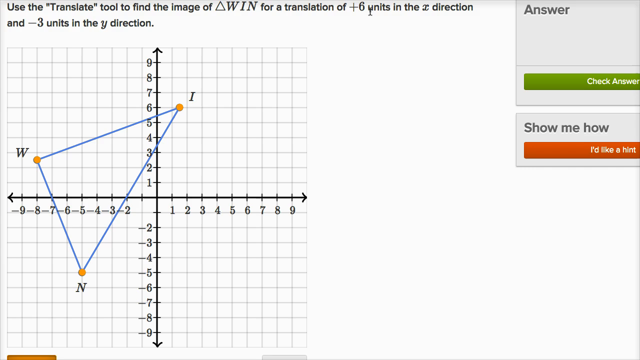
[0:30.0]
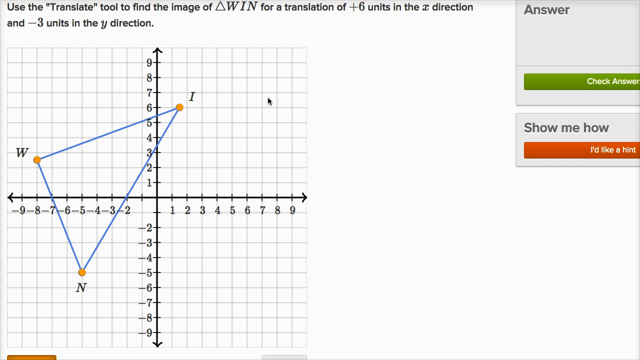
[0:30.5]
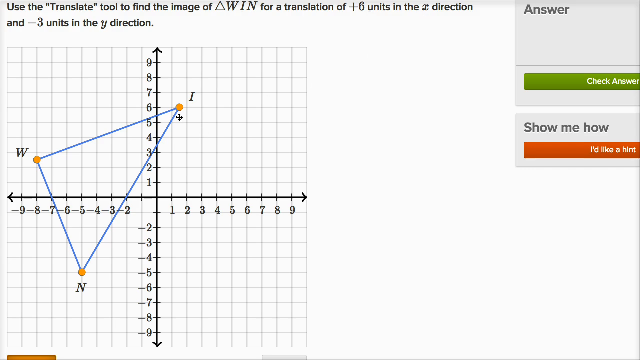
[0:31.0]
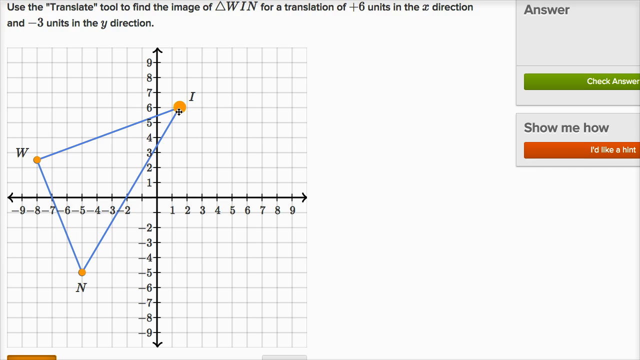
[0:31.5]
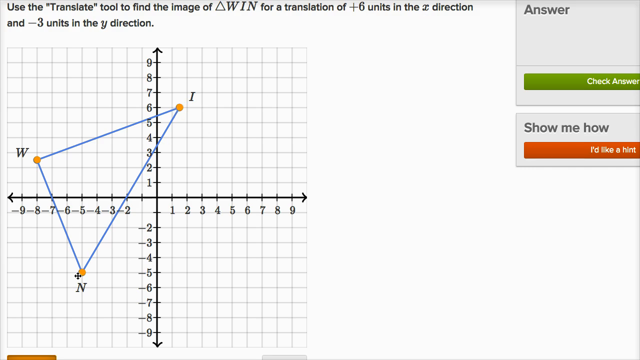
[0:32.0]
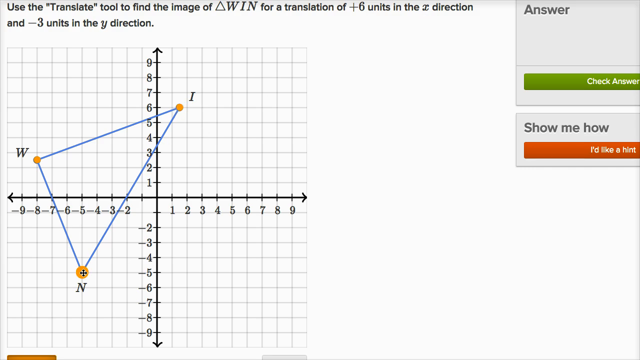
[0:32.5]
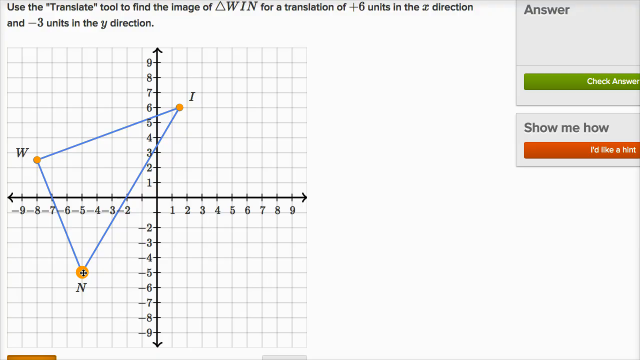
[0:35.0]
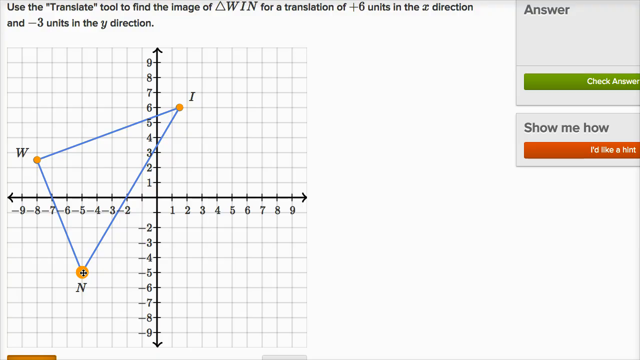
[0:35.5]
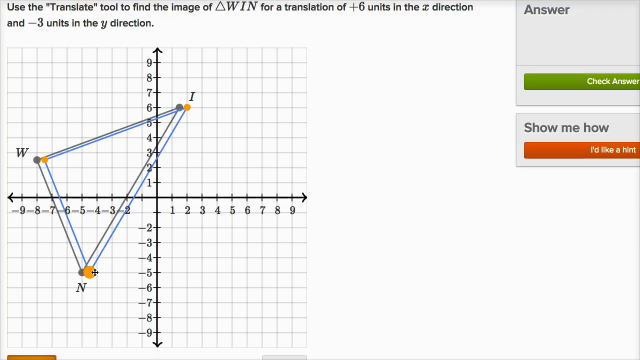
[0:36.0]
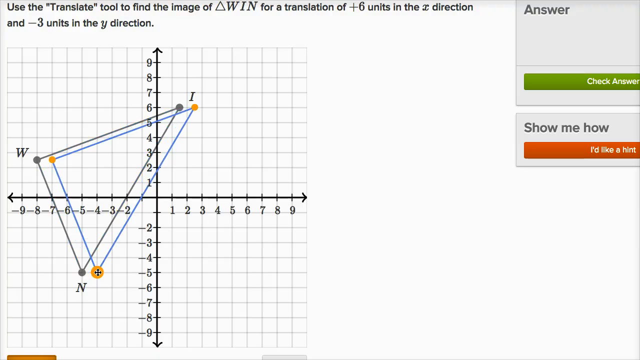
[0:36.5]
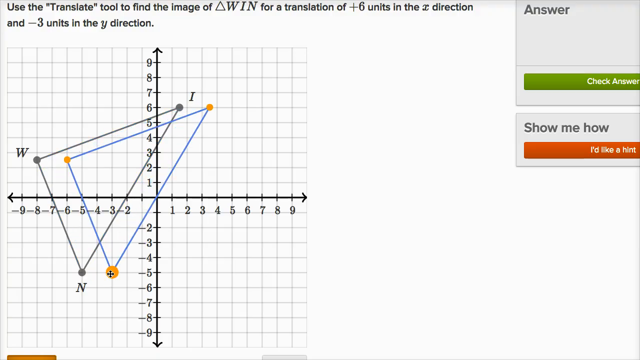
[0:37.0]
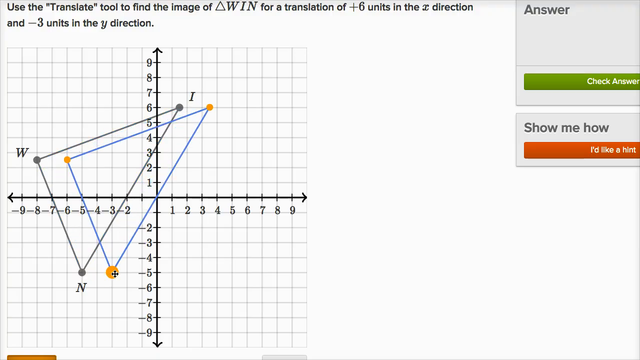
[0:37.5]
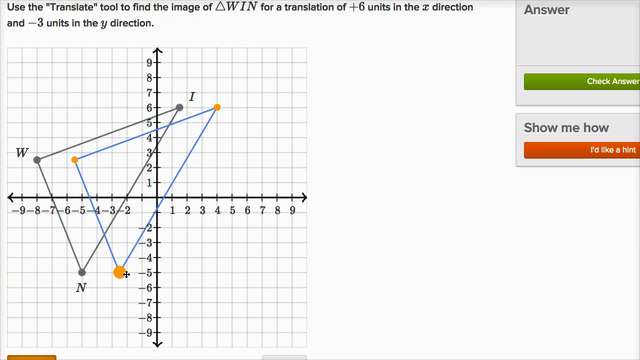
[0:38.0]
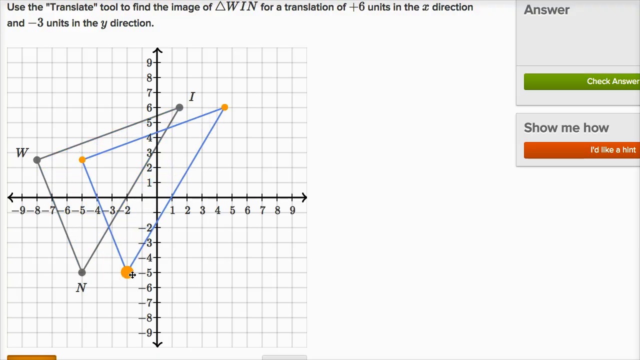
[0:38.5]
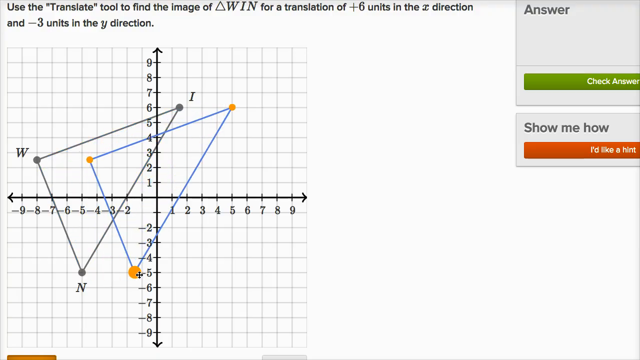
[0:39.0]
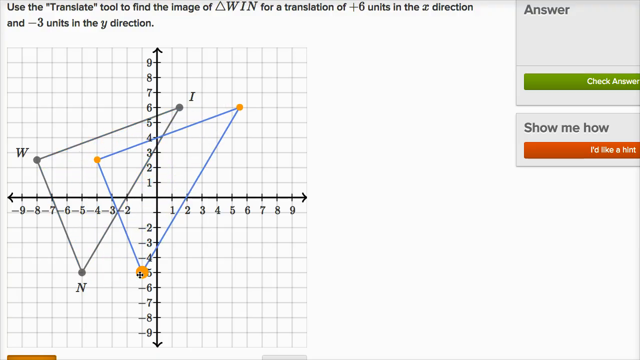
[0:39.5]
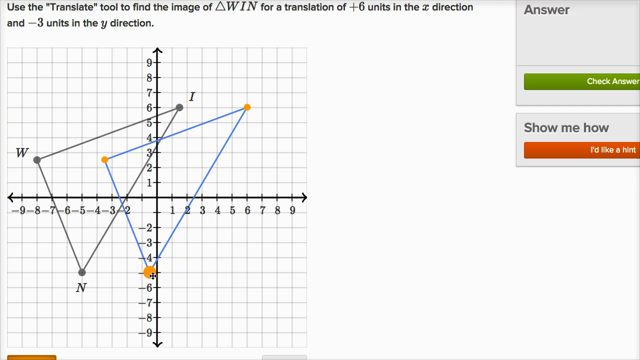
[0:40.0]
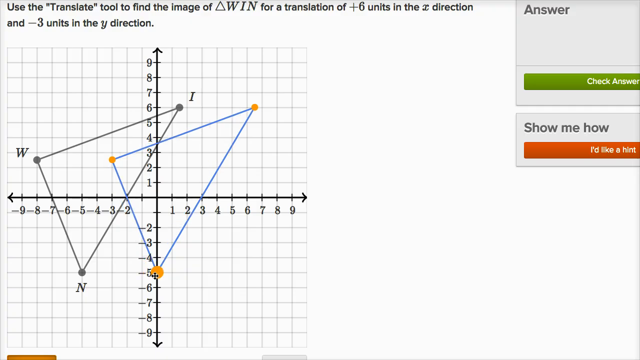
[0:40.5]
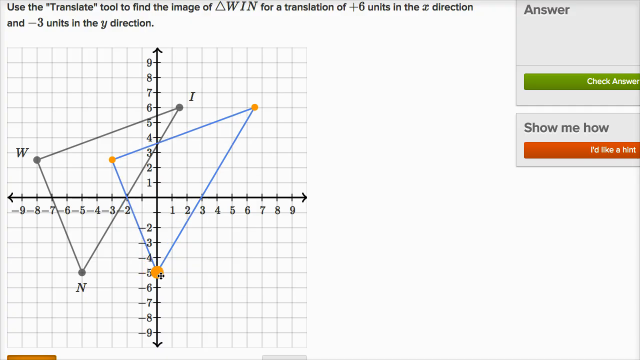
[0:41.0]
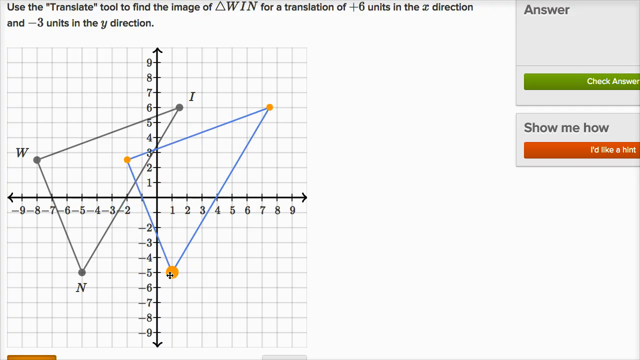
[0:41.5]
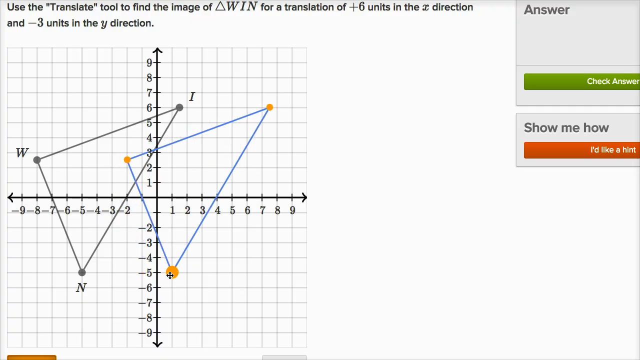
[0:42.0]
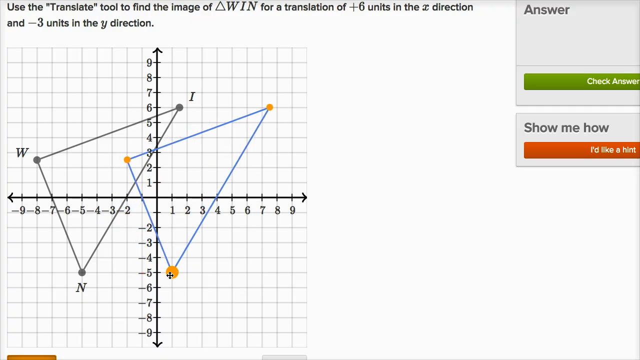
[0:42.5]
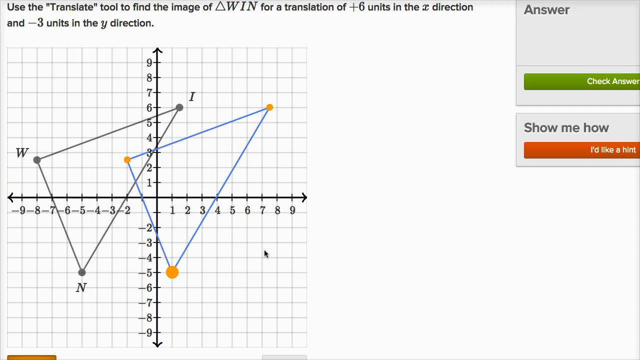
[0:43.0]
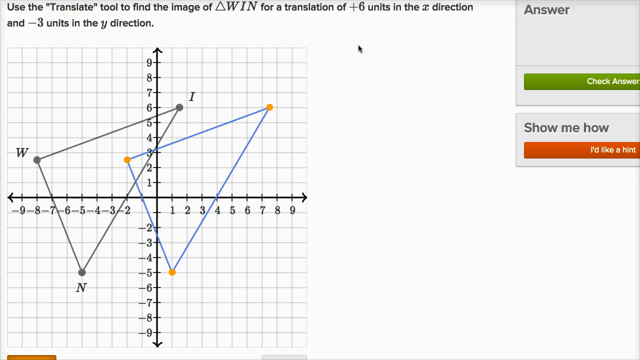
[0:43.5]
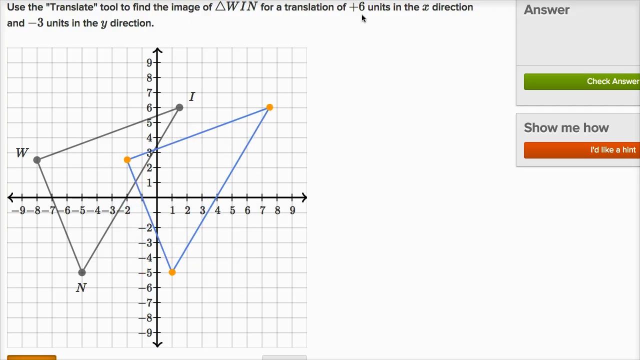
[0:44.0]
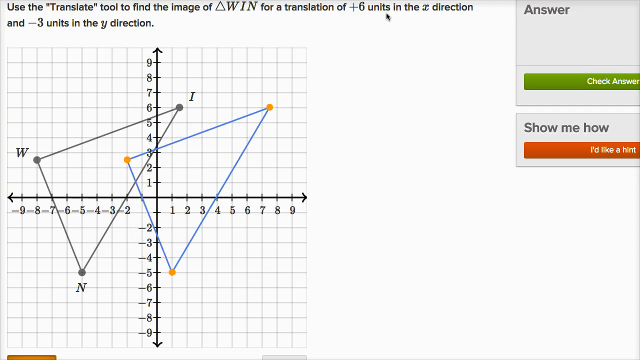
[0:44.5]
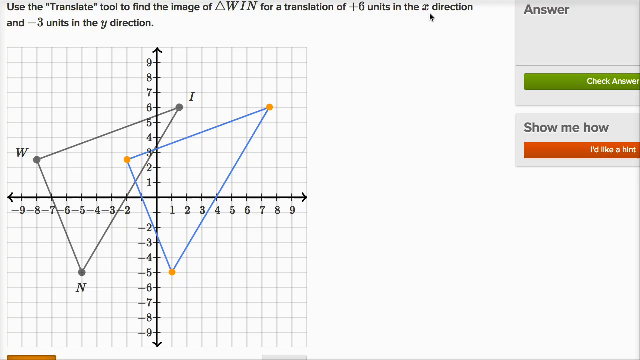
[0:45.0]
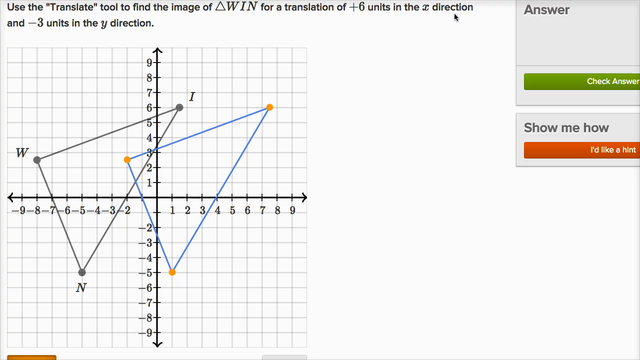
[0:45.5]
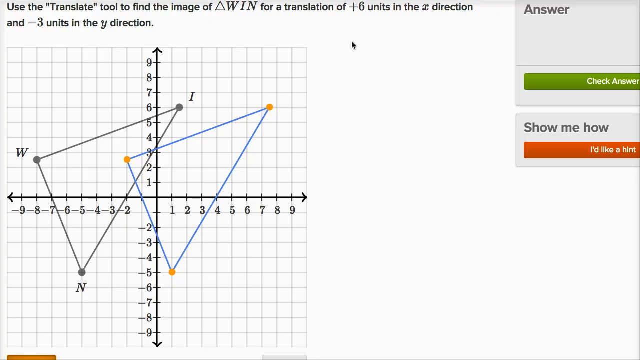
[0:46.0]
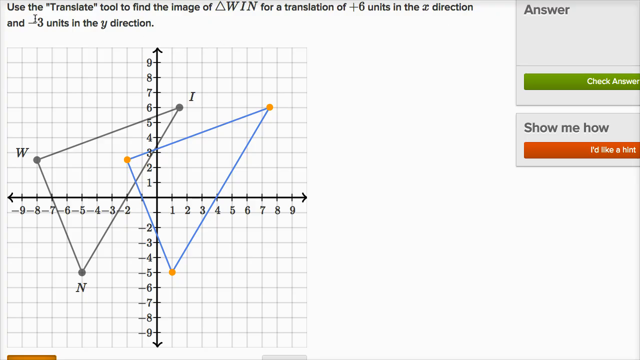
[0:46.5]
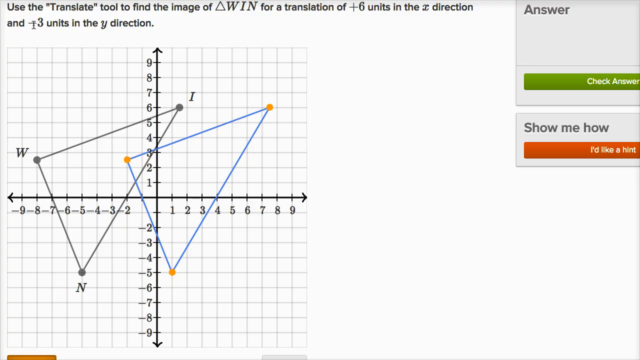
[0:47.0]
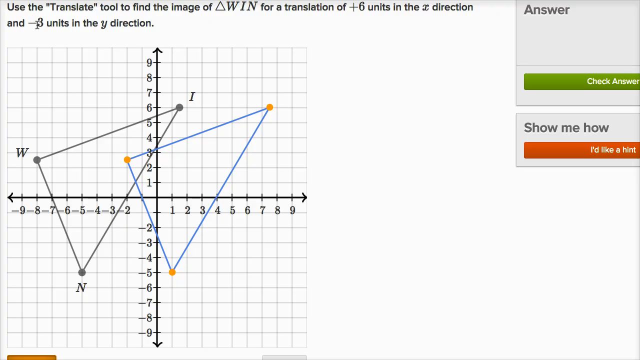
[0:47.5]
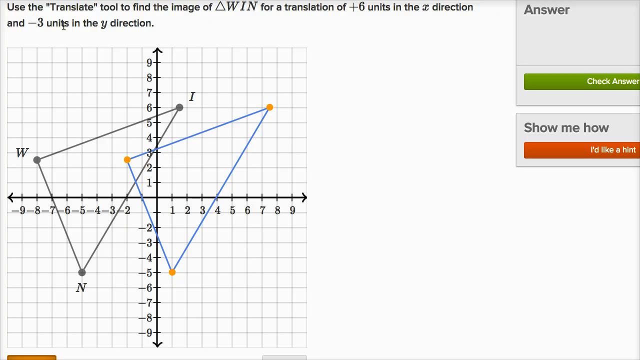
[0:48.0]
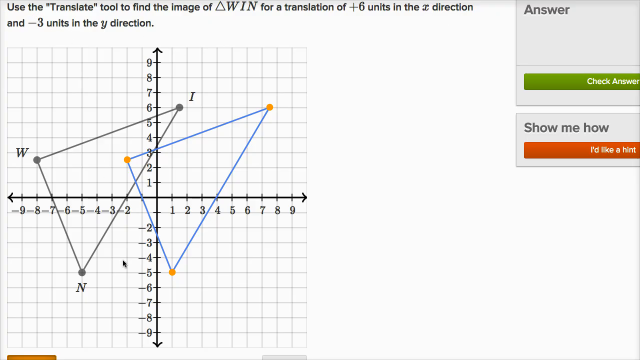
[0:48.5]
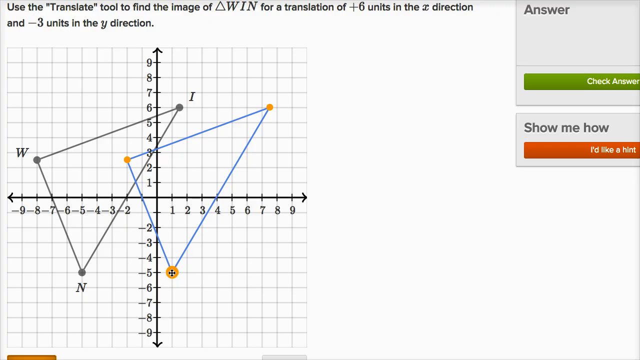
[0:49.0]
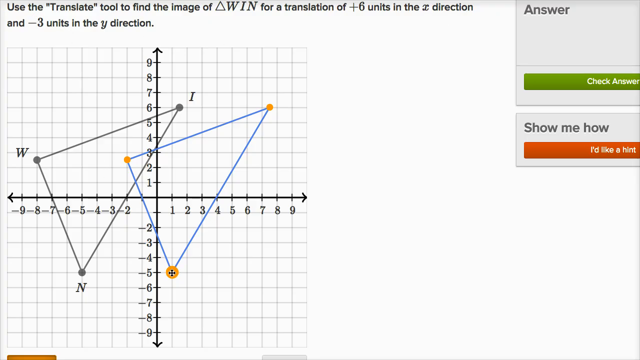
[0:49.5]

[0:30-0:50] The transform button at the bottom left of the graph has been switched on, making each of the points glow and clickable. The person appears to click on the points, then clicks on N, holds it down, and drags it. At the top, the mouse is placed over the "plus six" where the question says "for a translation of plus six". N starts at negative five and is dragged toward one, and the entire triangle moves over with it. The blue triangle with yellow dots has been moved, and its old position is grayed out: a faded gray triangle remains visible where it used to be.